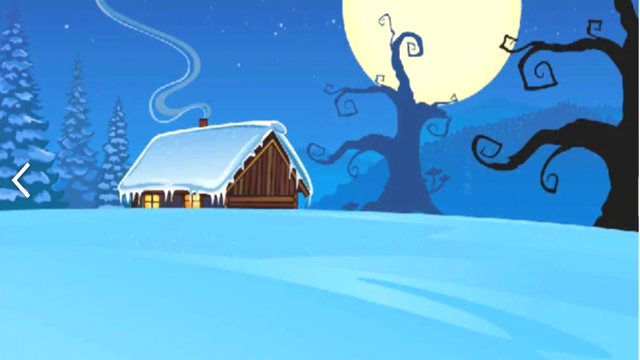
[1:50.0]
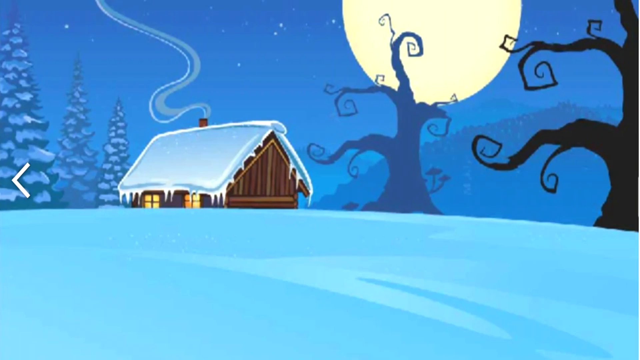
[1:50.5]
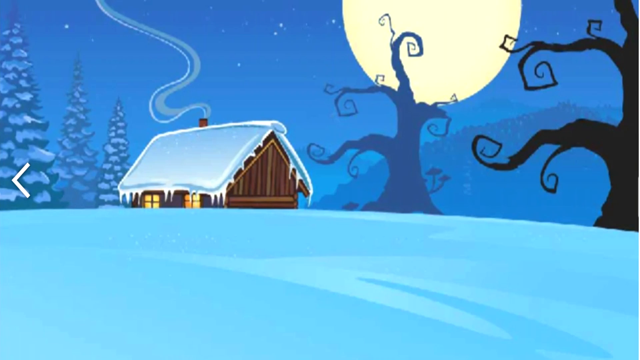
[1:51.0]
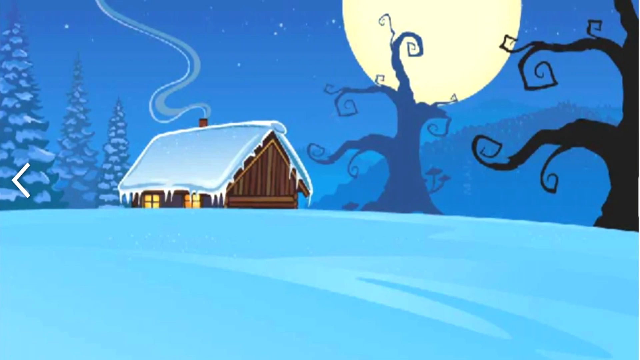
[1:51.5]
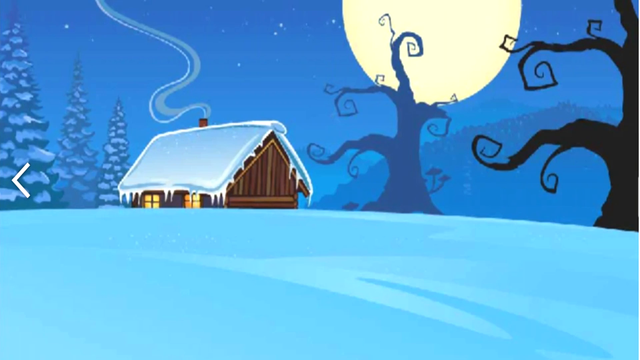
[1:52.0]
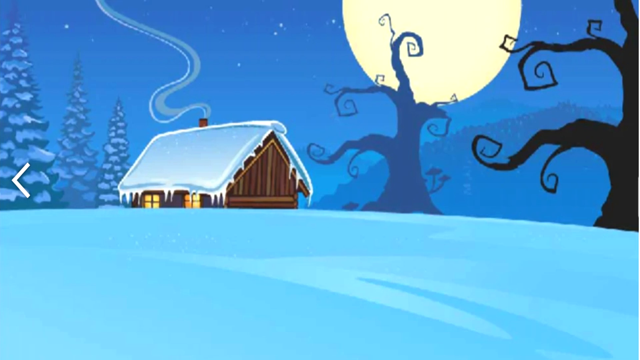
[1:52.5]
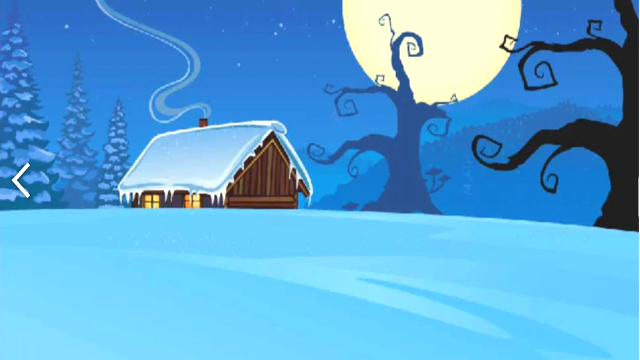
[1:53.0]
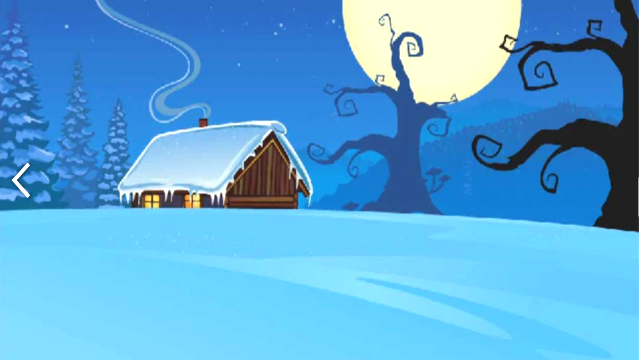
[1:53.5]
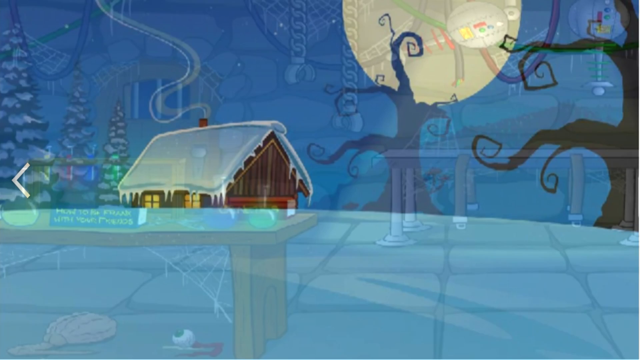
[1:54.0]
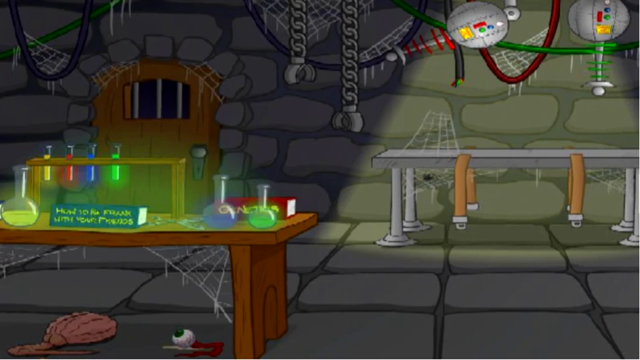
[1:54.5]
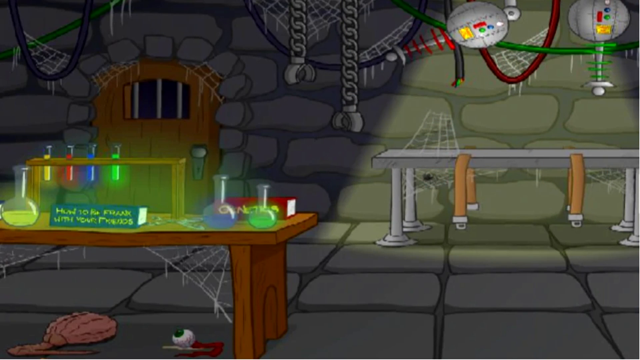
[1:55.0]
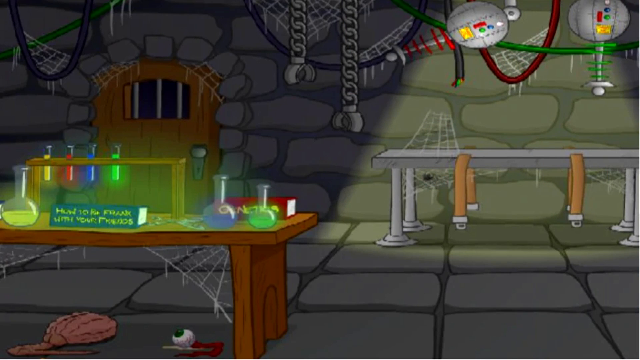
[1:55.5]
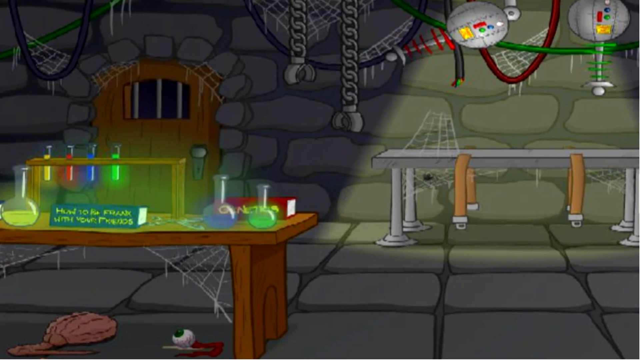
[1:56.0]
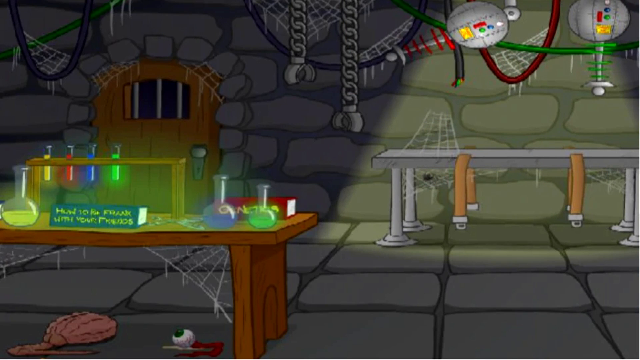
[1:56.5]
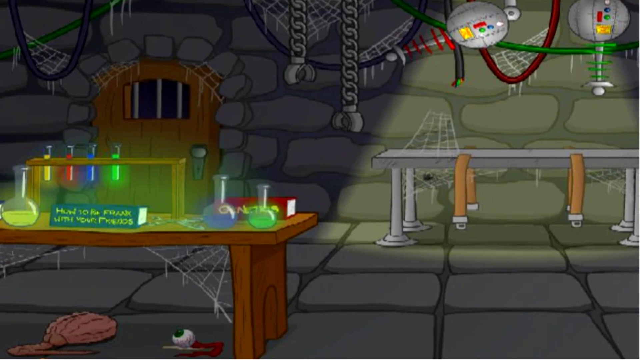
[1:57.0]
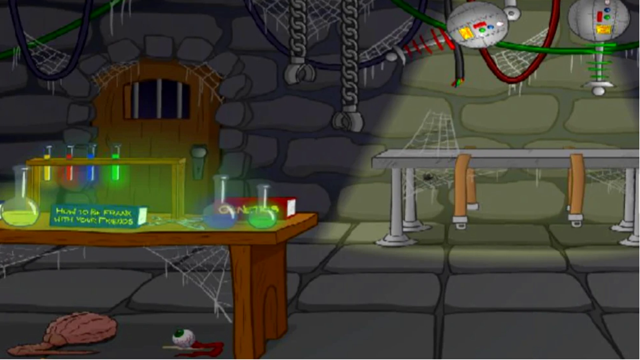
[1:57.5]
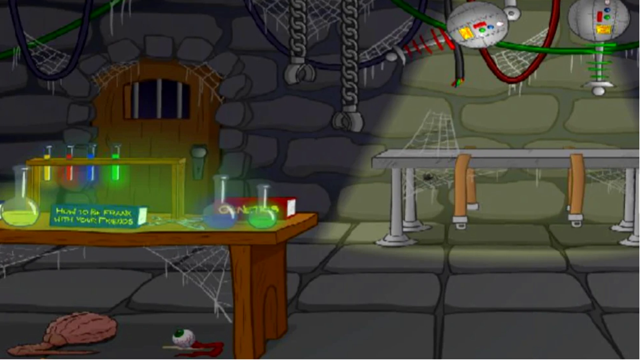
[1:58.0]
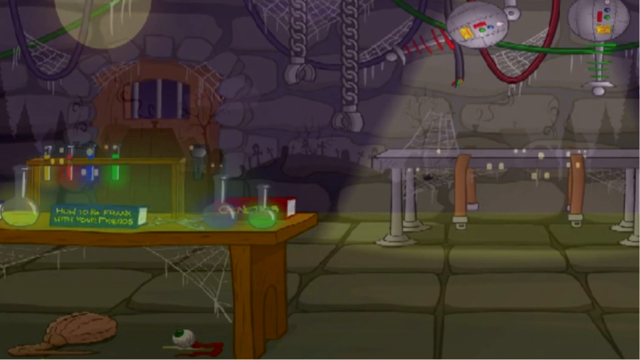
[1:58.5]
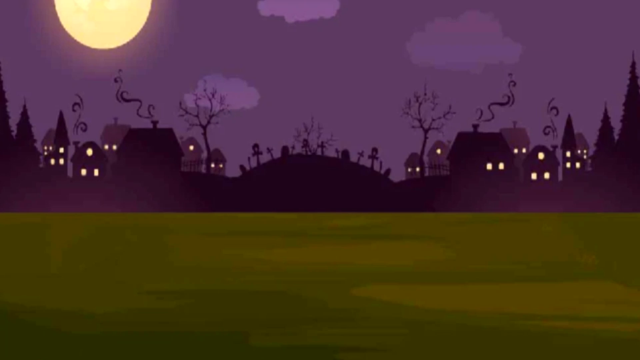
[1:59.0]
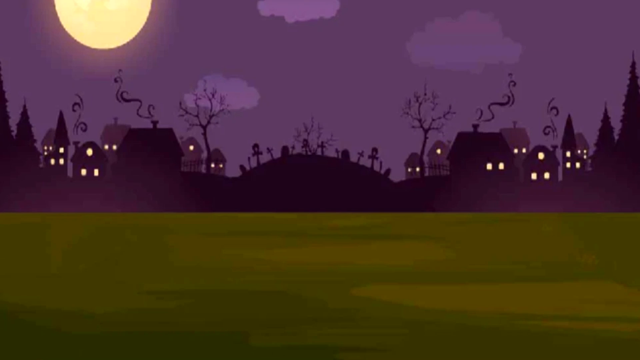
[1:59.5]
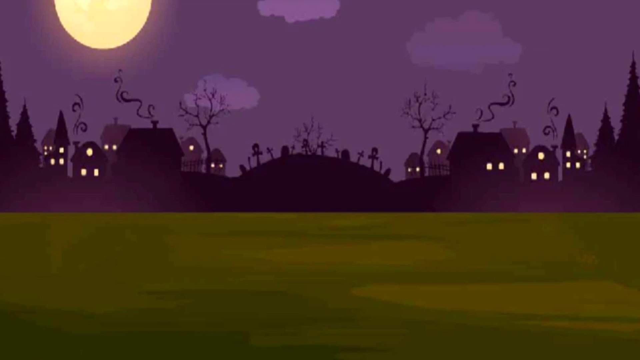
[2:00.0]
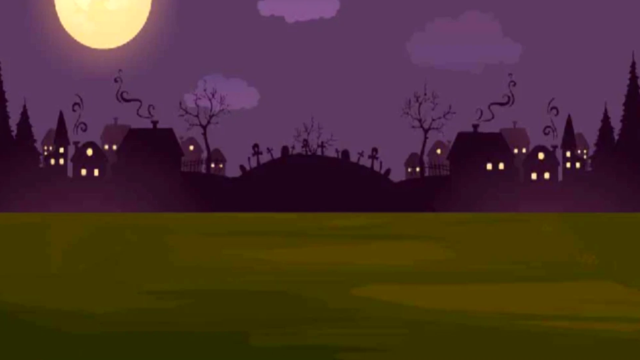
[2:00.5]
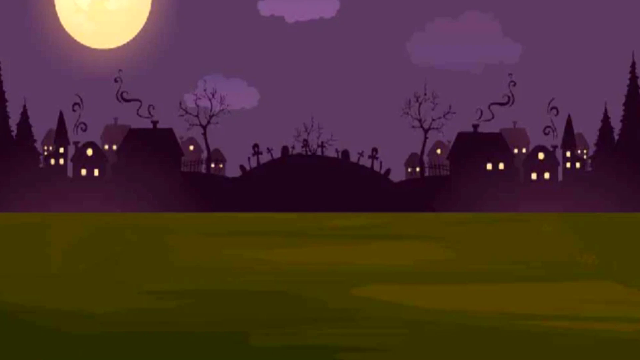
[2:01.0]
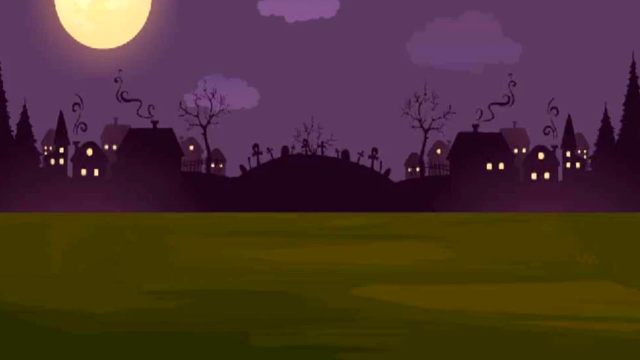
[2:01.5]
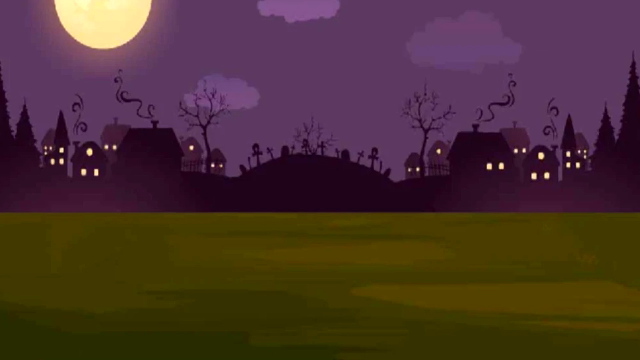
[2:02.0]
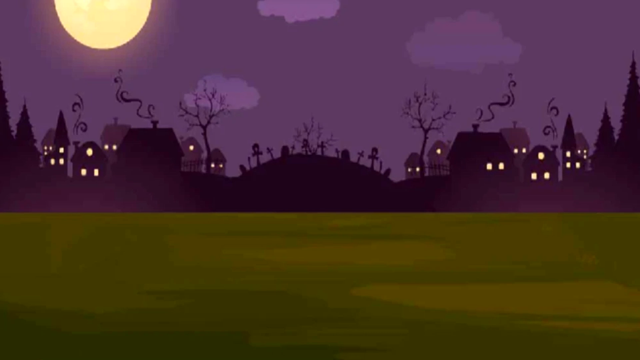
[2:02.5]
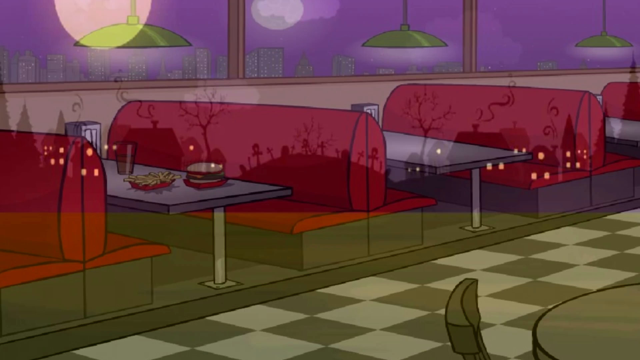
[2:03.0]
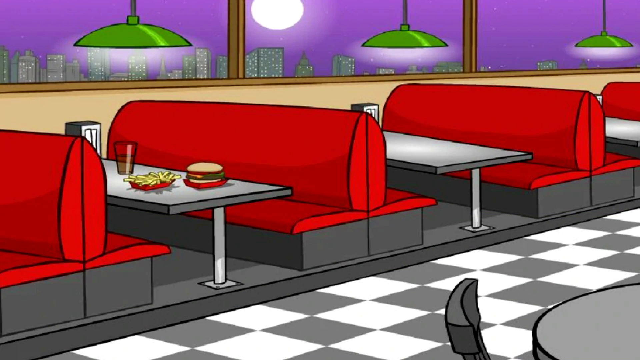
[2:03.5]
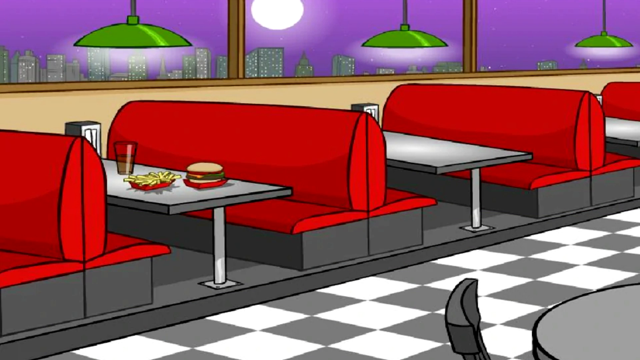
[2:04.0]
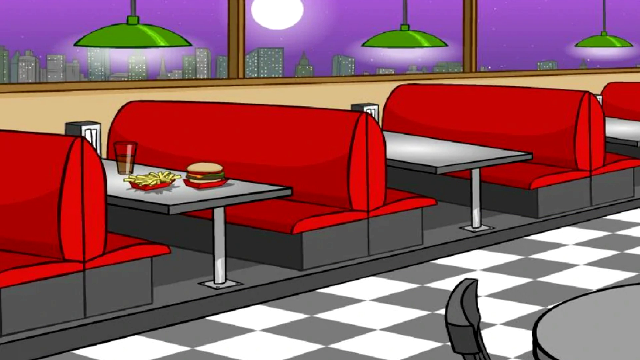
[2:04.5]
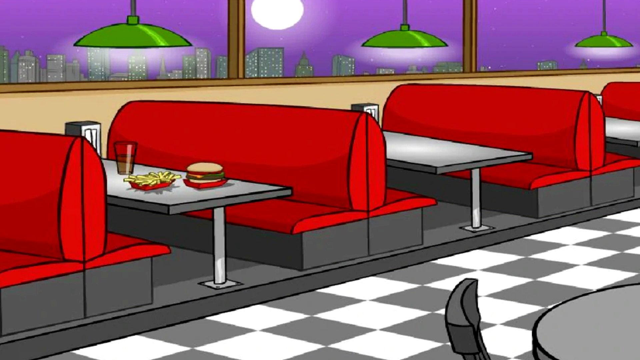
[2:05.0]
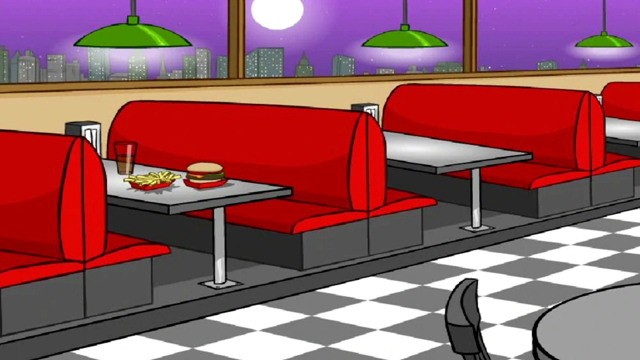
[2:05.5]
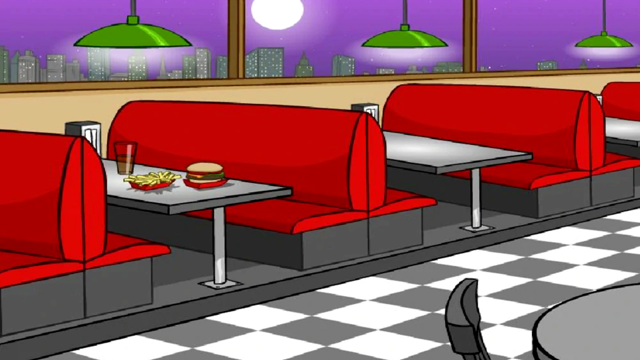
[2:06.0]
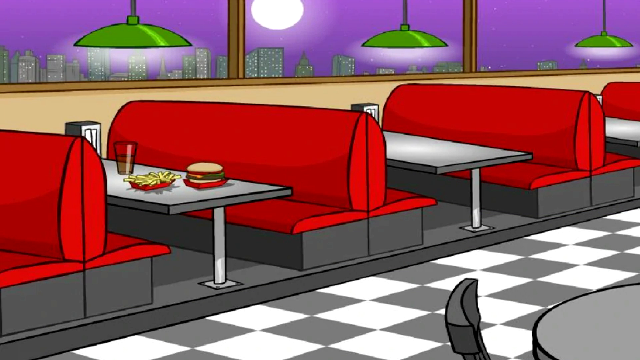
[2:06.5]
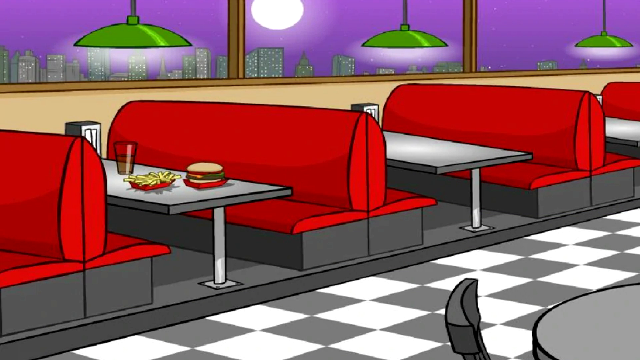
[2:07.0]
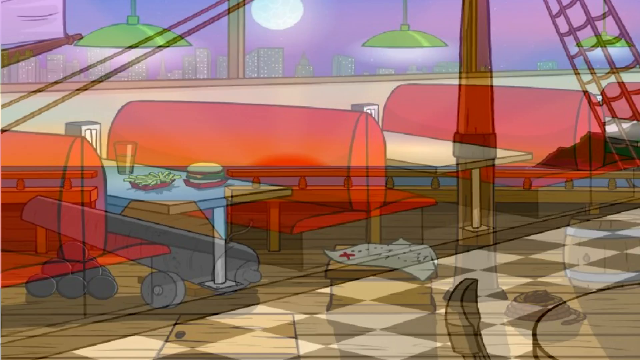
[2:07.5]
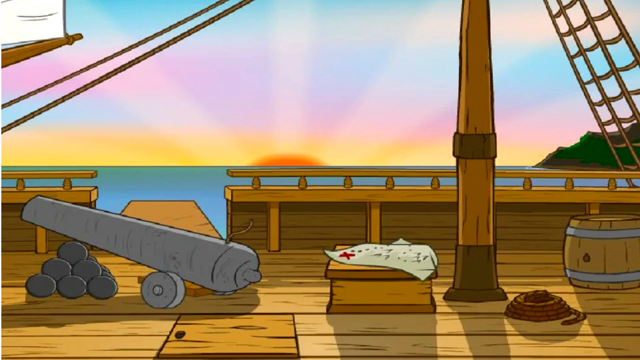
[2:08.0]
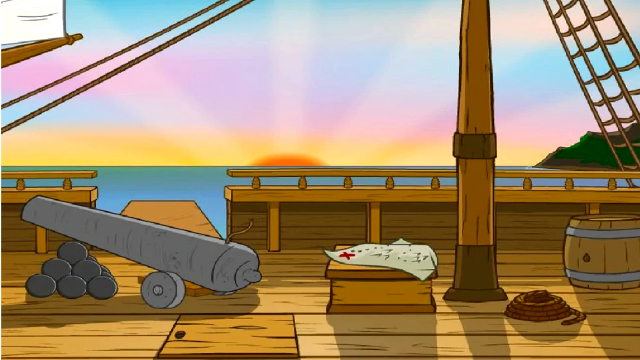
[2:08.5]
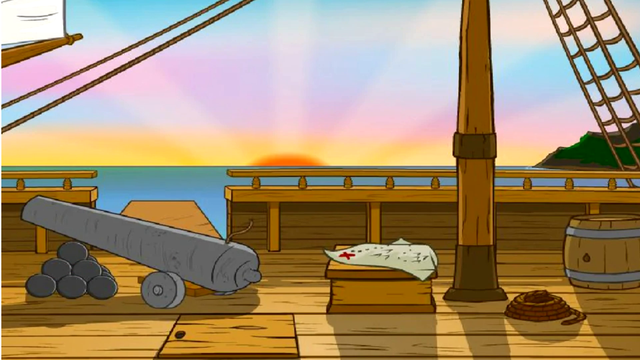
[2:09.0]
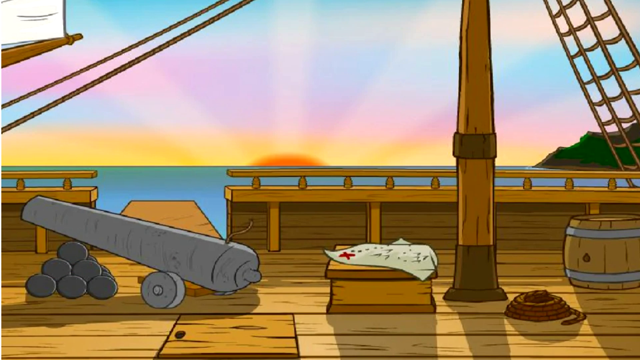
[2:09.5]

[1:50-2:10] A background of eerie trees follows; they look almost as if they have fingers, with a full moon behind them. Snow covers the ground, and there is a wooden lodge with lights on in two visible windows, snow all over the roof and smoke coming out of the chimney at the top. Next to it are three big Christmas-tree-type trees, all covered in snow. Next is a sort of lab with brick walls and brick floors. What looks like a torture table is at the back, with straps for strapping someone down, and there are lots of cobwebs. Up high are some things that may be stun-gun-type devices, and chains with metal grips at the bottom hang from the ceiling. On another table are test tubes glowing brightly, one yellow, one red, one blue and one green, as if they contain something toxic. In front of them is a flask with yellow liquid, and on another part of the table are a green and a blue flask with liquid and a red box that cannot be seen well. The background resembles an evil, eerie dungeon. Then comes an eerie night background with green grass, a purple sky, a full moon and a couple of clouds. There are silhouettes of houses with smoke coming out and bright orange-yellow lights. In the middle of the screen is a small round hill that looks like it has gravestones and crosses on it. The video cuts to a diner with red booths like those in an American diner. Outside are a full moon and skyscrapers in the background. Inside, three green lights hang over different booths, and the red booths have silver tables. On the table at the left of the screen are a glass with some liquid in it, probably just under half full, a red plate of chips, and a red plate that looks like it holds a burger with maybe some lettuce poking out the side. The floor is gray and white checkered. The video then cuts to a pirate ship.